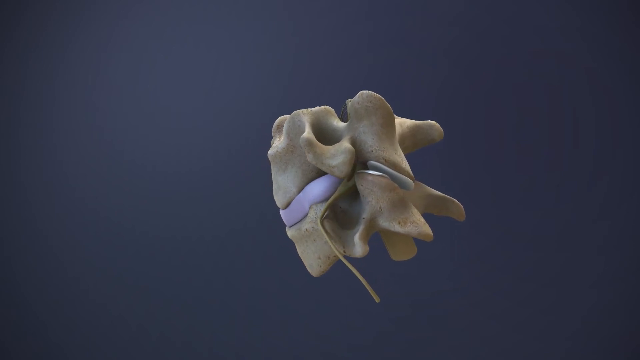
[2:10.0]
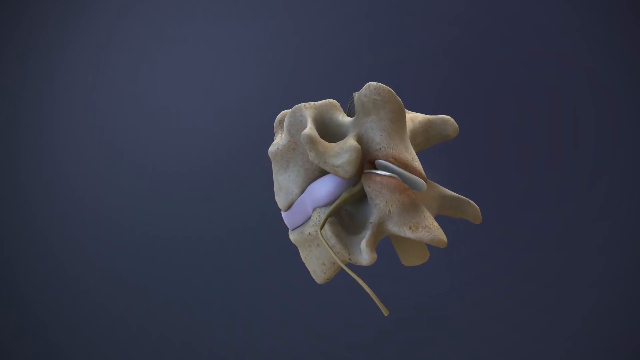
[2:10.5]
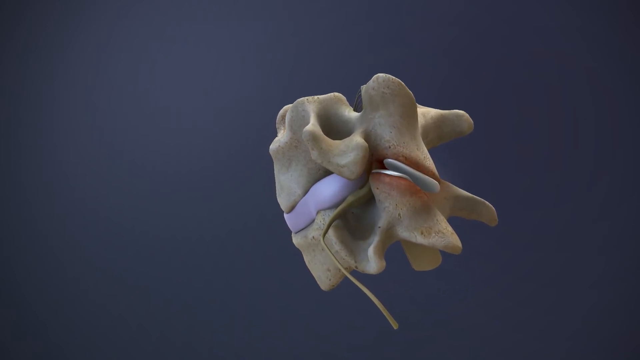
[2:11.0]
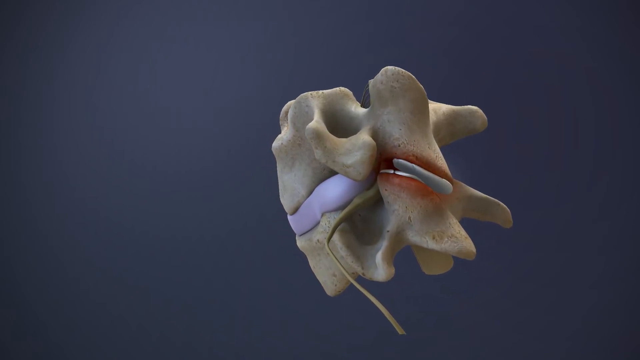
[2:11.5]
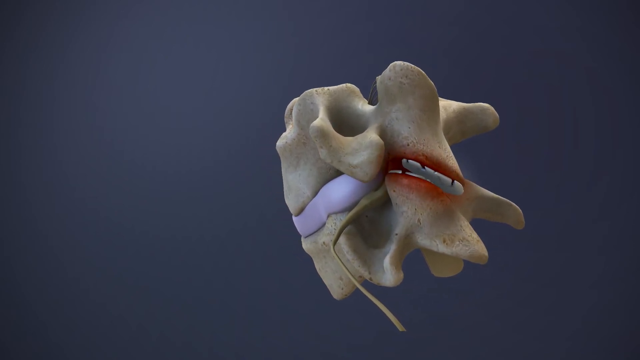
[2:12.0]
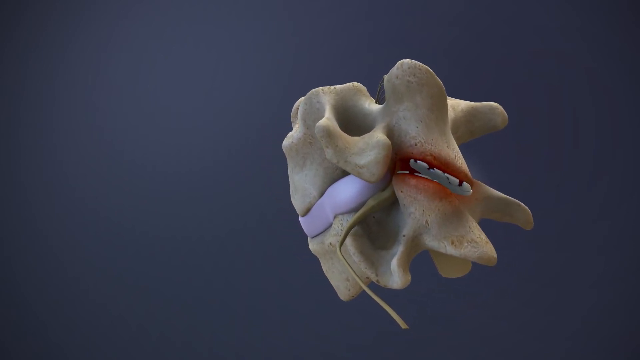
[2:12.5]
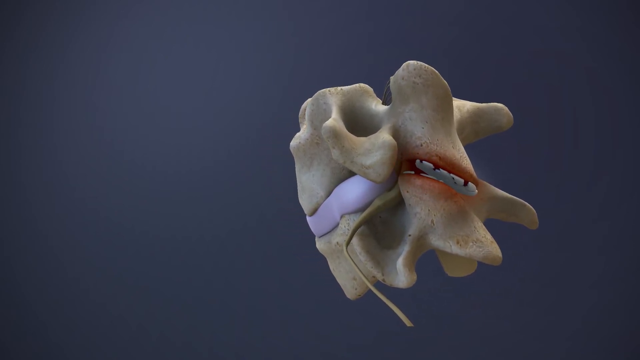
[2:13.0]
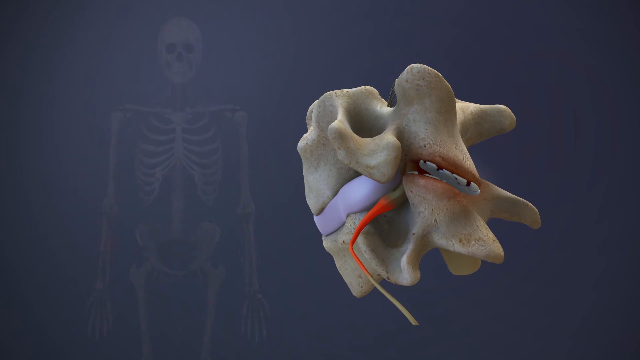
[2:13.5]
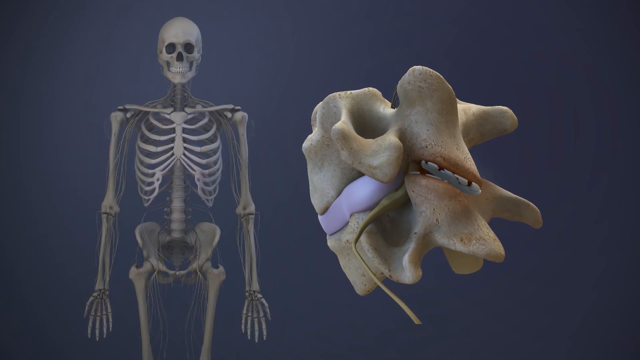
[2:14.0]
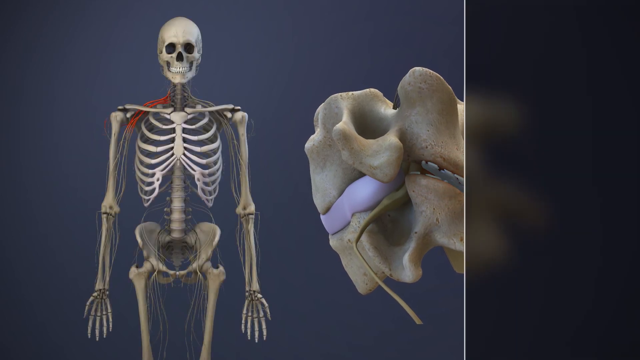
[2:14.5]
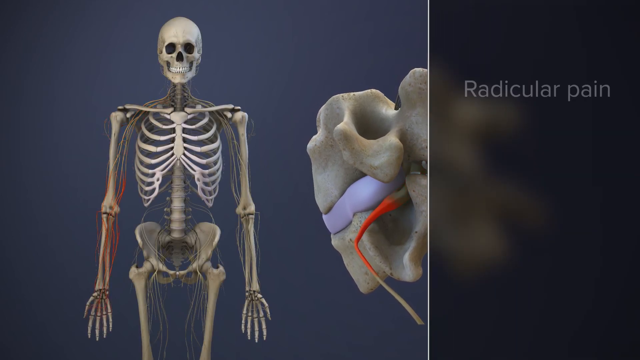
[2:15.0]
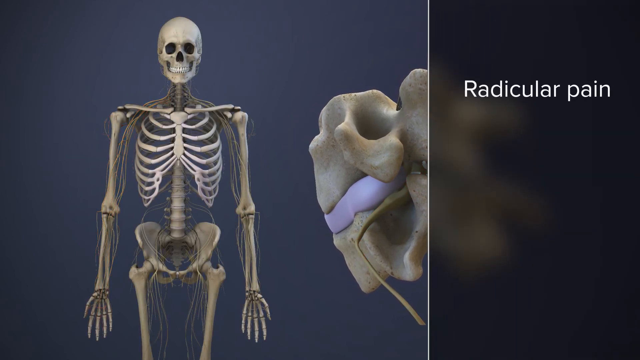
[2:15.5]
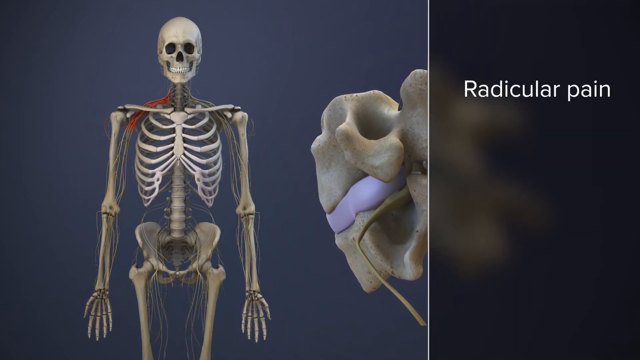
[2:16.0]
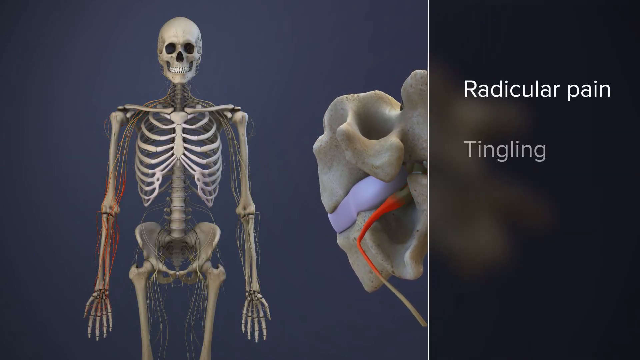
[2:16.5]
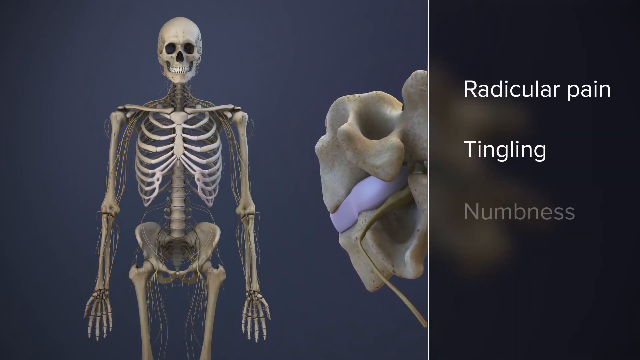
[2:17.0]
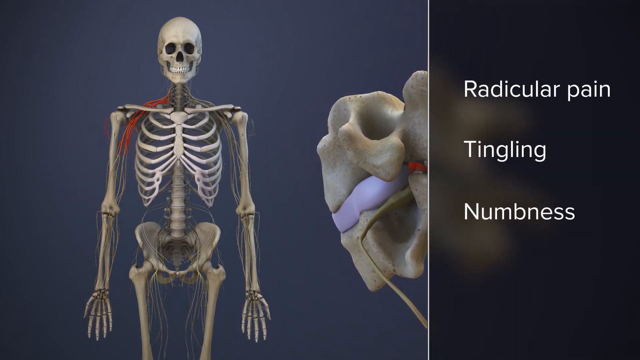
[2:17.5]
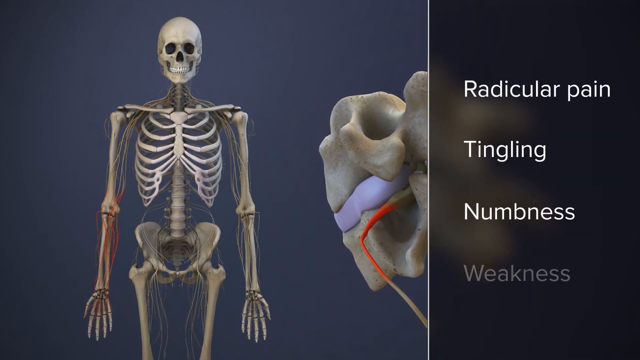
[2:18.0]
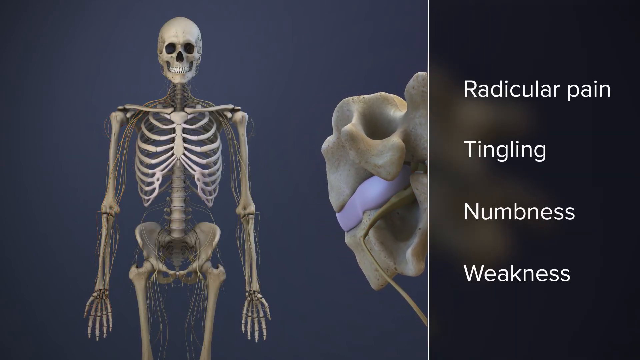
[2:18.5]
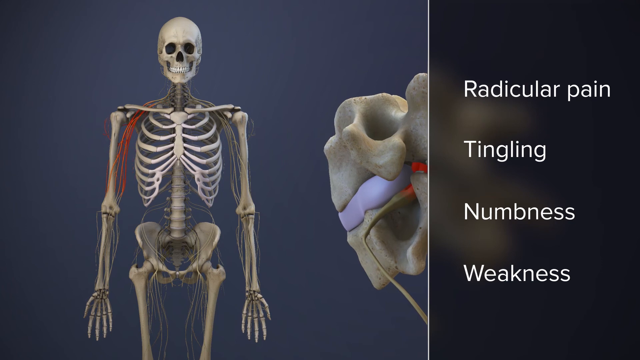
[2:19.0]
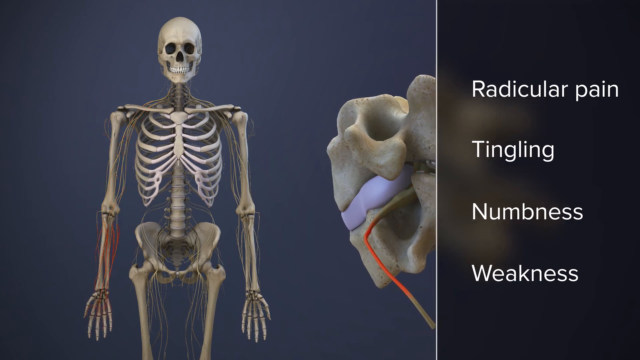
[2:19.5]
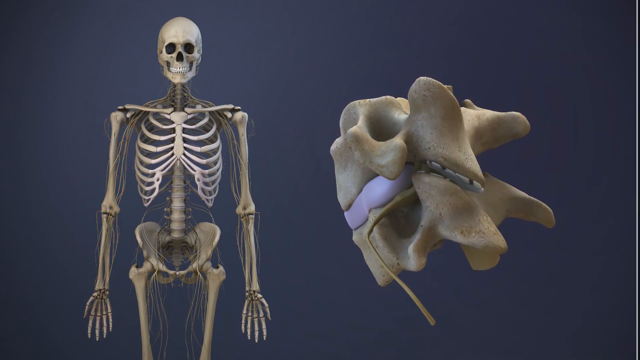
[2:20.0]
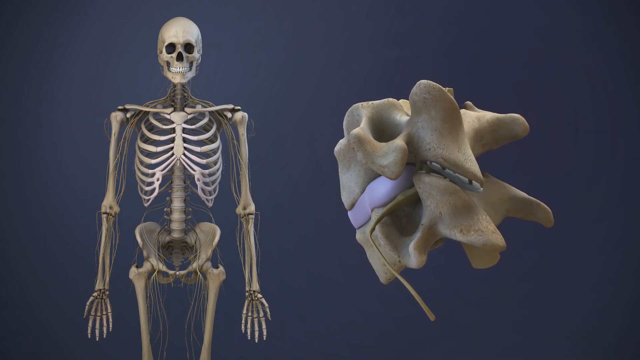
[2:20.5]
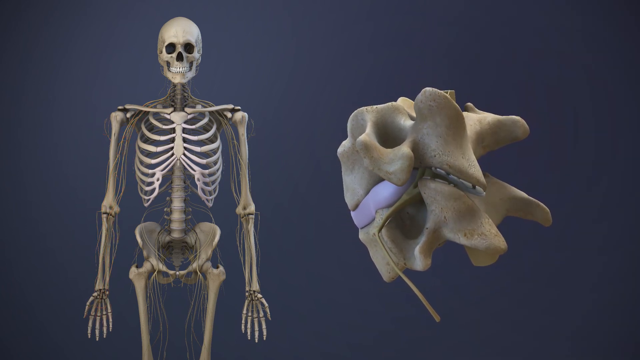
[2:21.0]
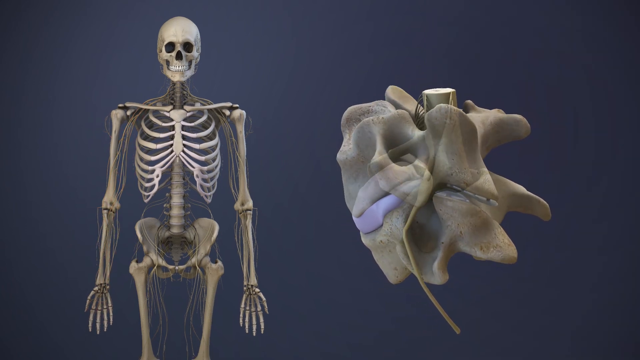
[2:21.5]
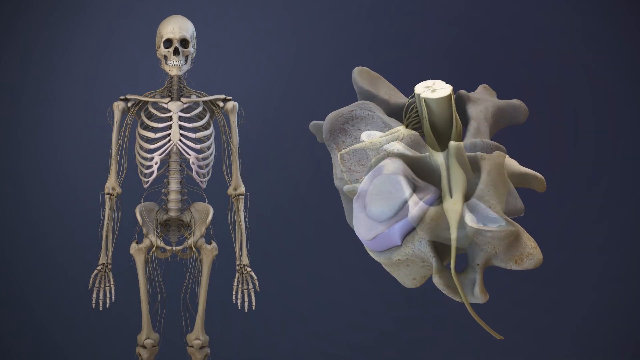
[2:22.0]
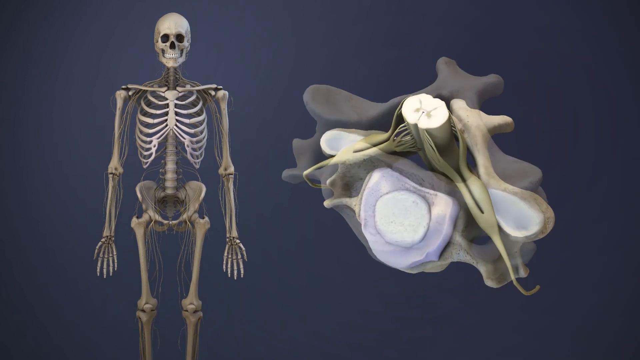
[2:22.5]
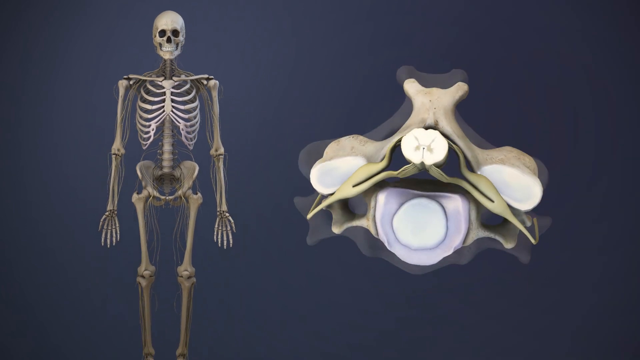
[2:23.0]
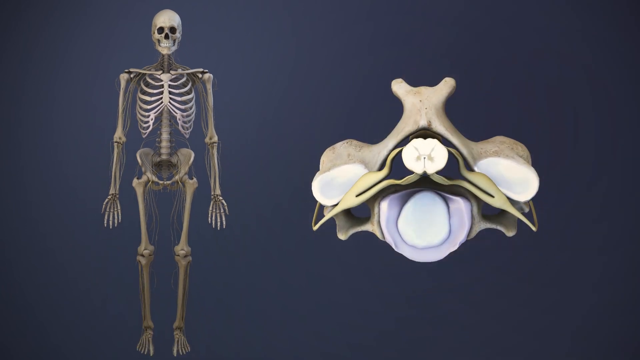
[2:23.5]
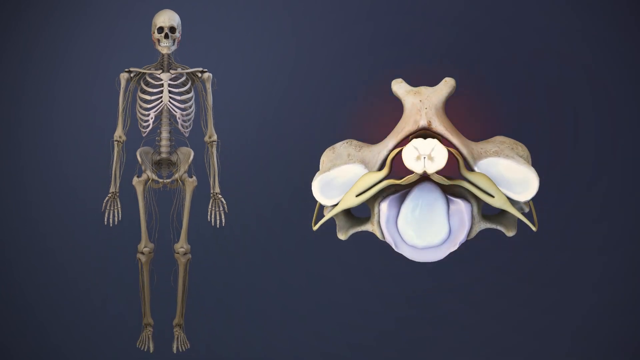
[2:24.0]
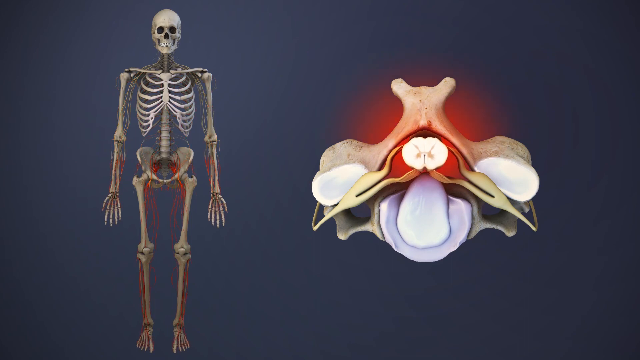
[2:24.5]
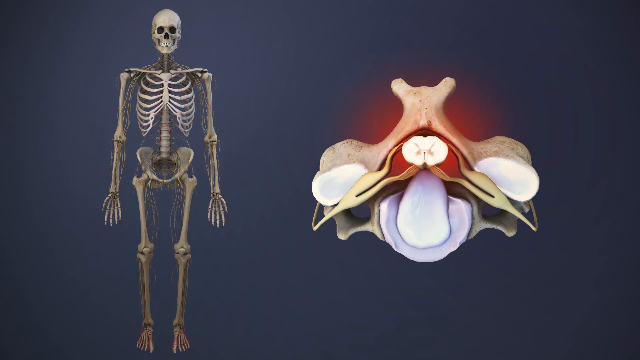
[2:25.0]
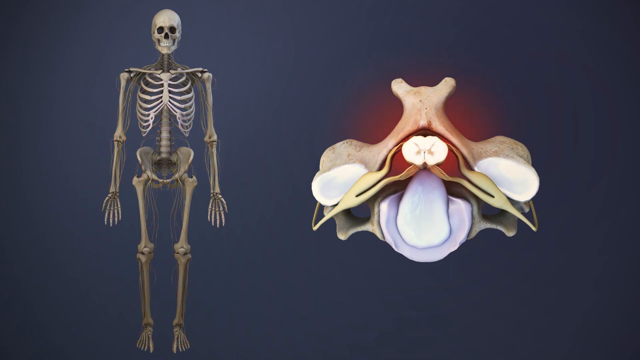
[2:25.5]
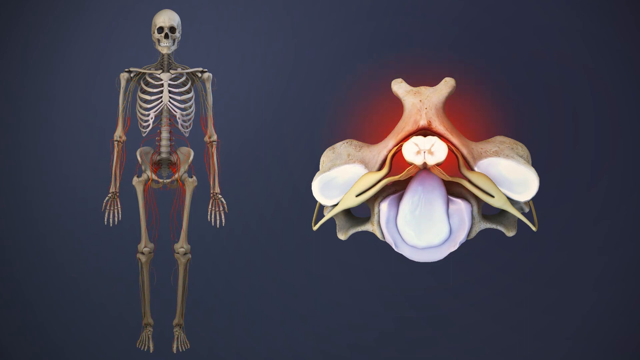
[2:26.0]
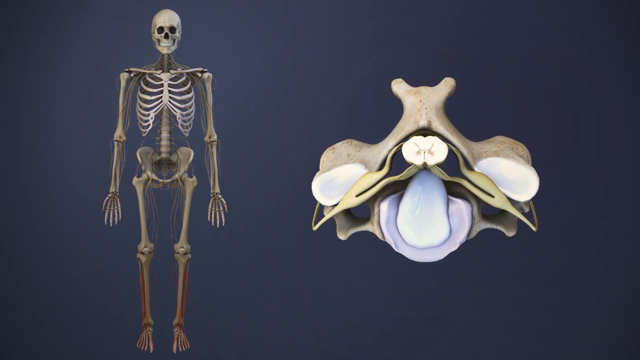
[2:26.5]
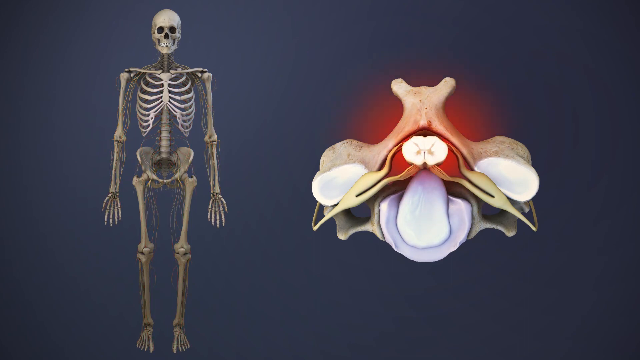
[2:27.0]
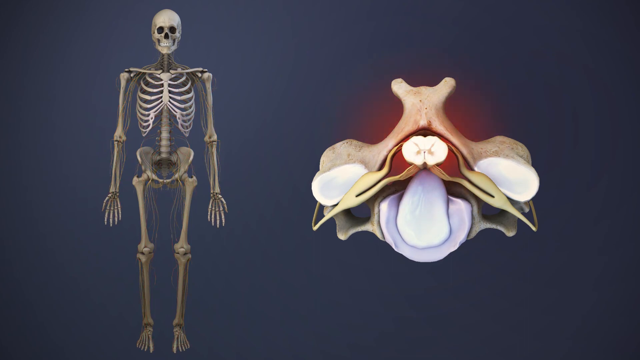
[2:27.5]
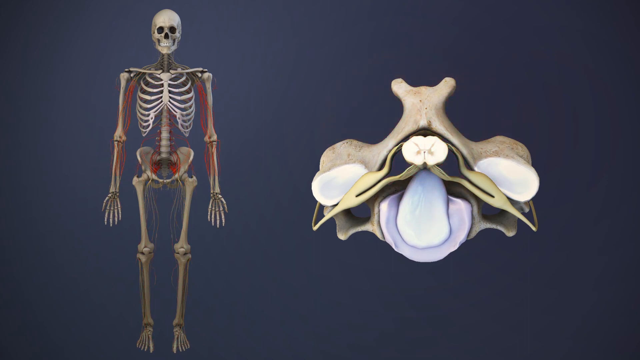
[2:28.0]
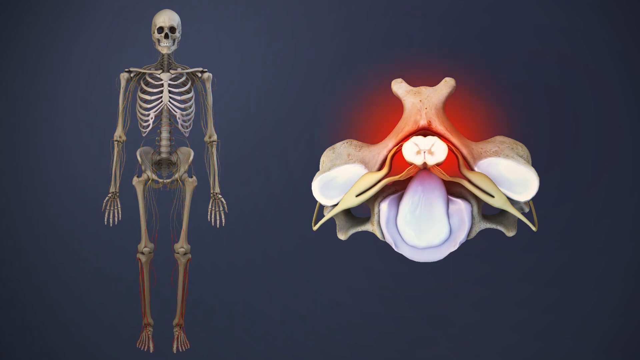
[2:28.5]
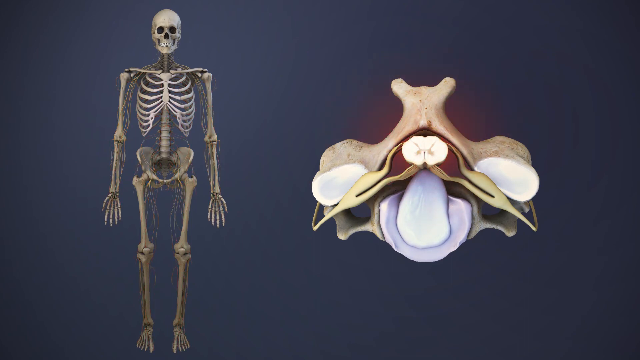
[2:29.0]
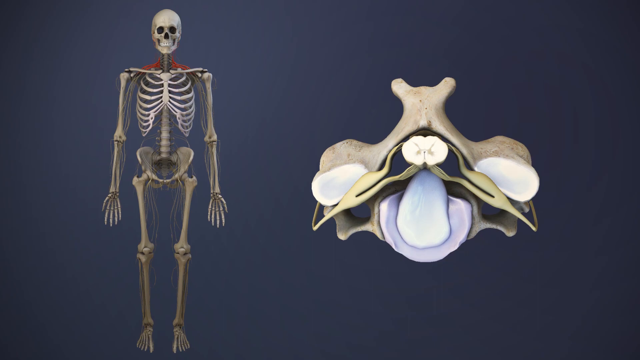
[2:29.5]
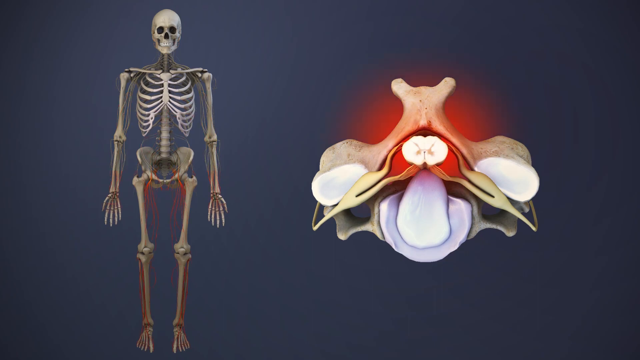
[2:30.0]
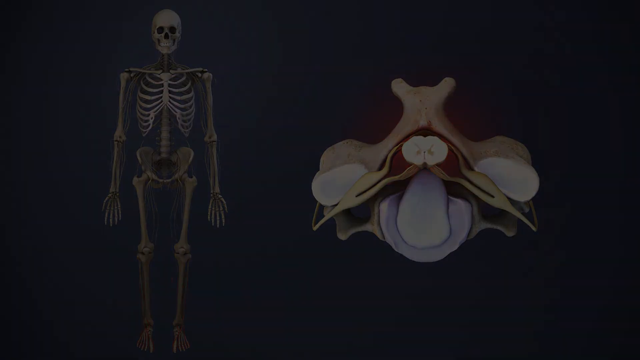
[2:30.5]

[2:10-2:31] A side view of two vertebrae of the neck is shown, and the view zooms in to reveal a part that is red, with the words "radicular pain" on the right side. On the left side, a human skeleton facing the viewer shows redness throughout its right arm, like a shooting pain running from the neck all the way down to the hand. The view zooms away from the skeleton, and the piece on the right side shows the two vertebrae facing the viewer with redness indicating pain. The redness flashes while, at the same time, redness falls down through the skeleton's right arm. Finally, the red pain indication spreads on both sides through the whole body, the arms and the legs.